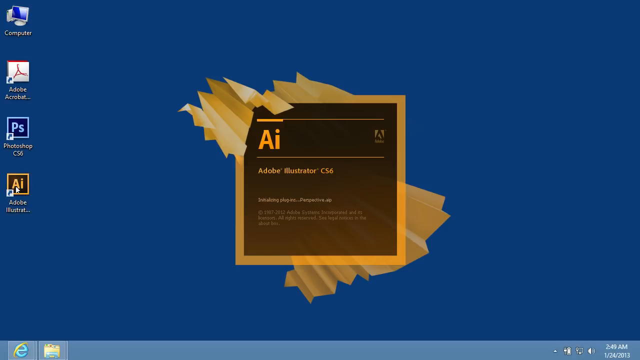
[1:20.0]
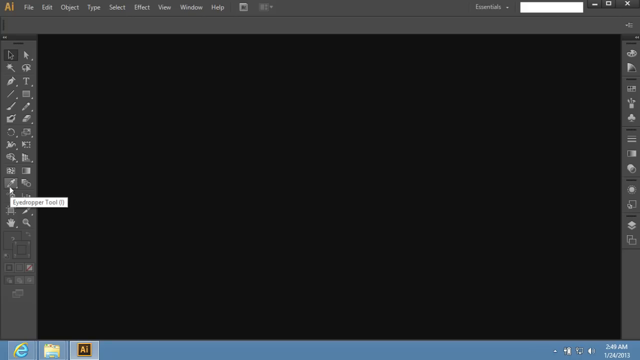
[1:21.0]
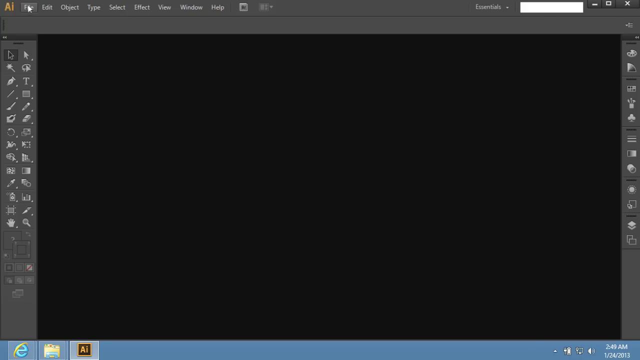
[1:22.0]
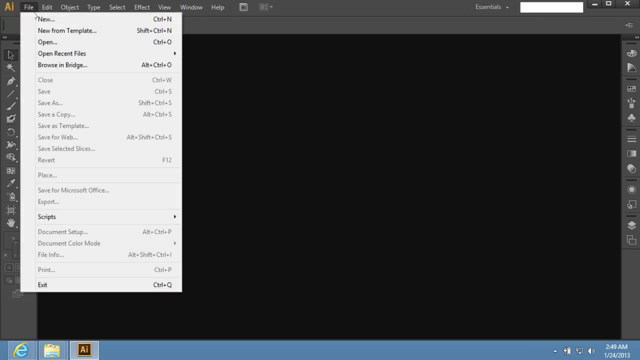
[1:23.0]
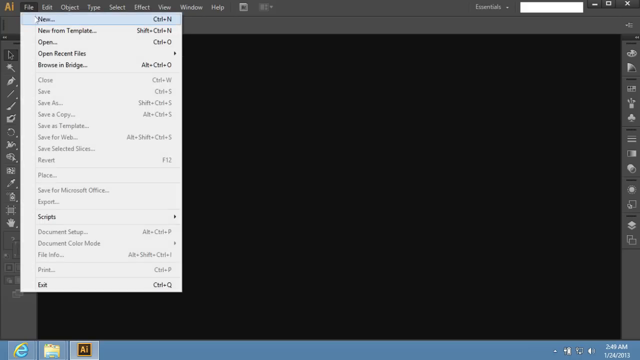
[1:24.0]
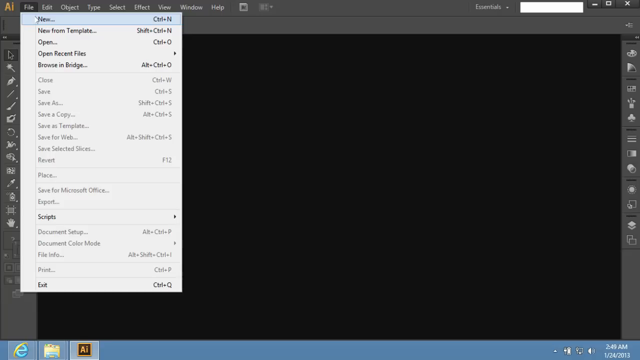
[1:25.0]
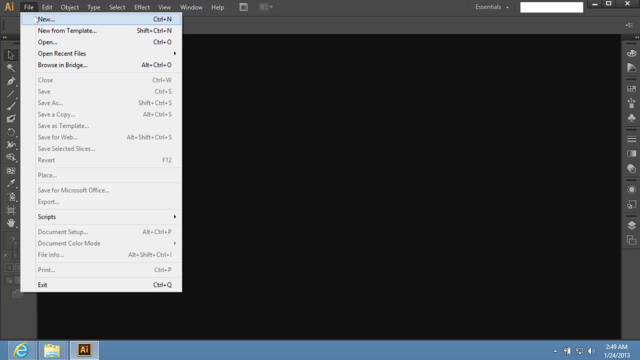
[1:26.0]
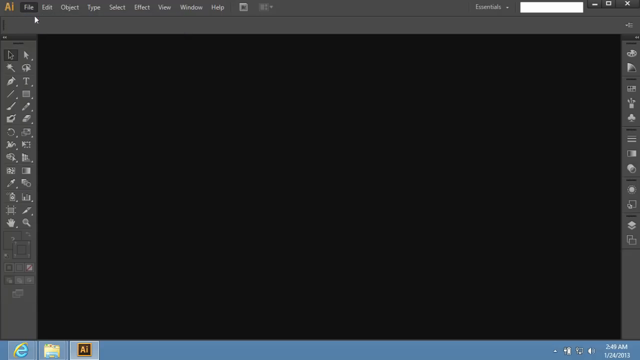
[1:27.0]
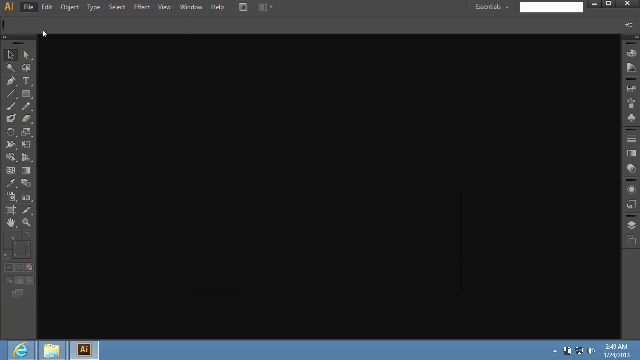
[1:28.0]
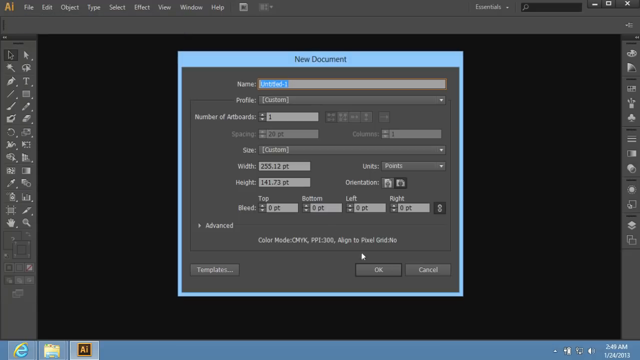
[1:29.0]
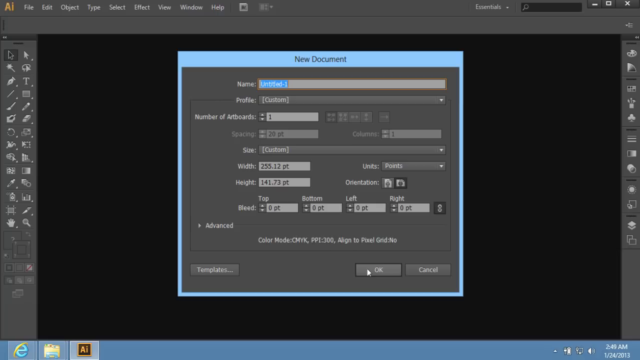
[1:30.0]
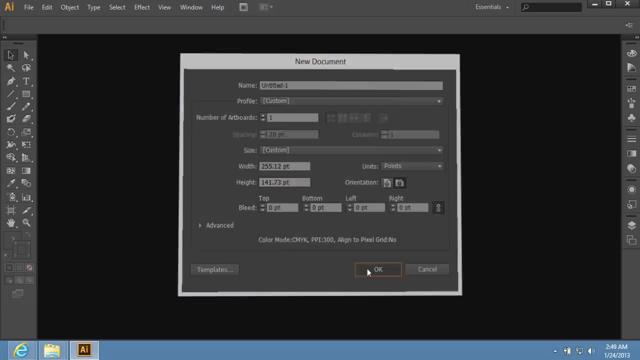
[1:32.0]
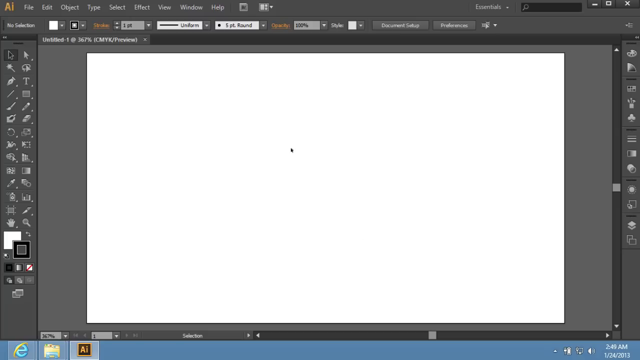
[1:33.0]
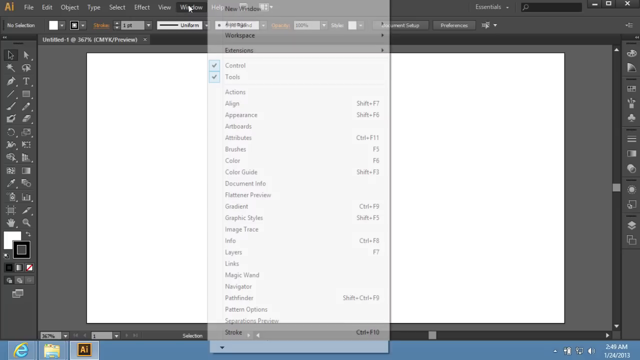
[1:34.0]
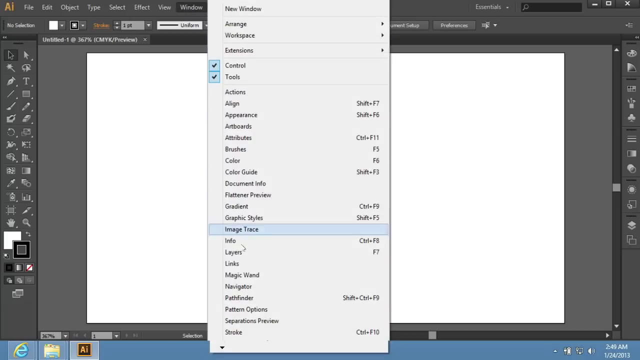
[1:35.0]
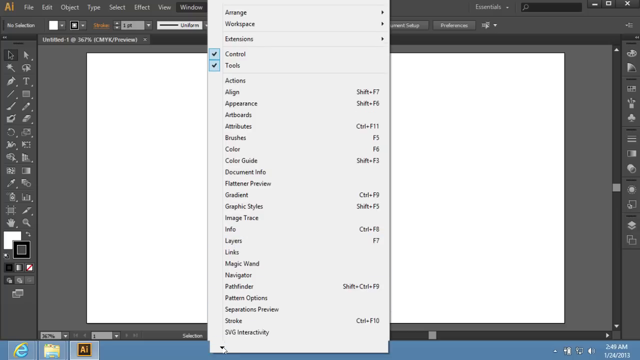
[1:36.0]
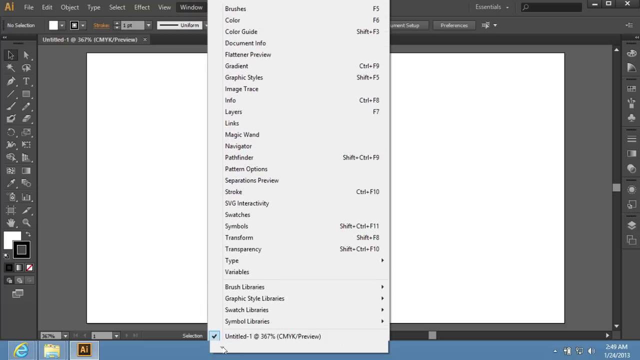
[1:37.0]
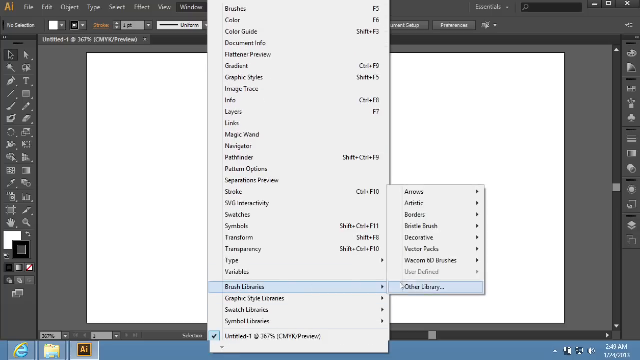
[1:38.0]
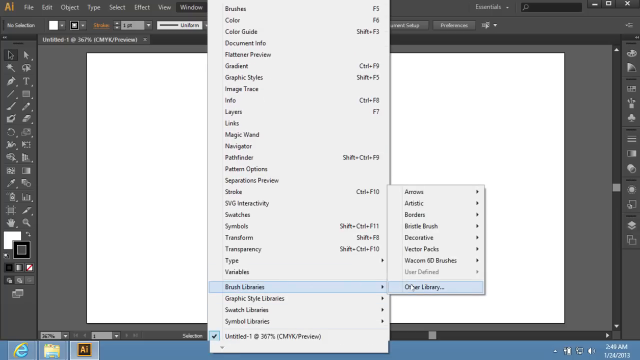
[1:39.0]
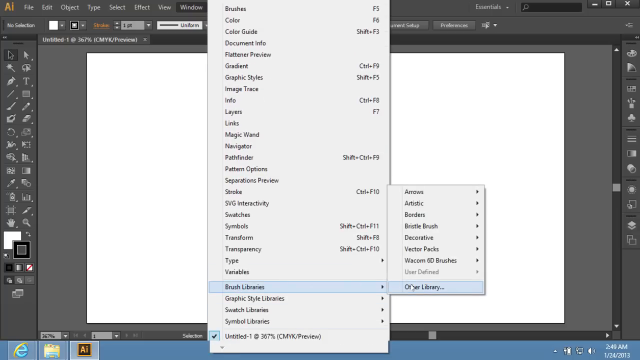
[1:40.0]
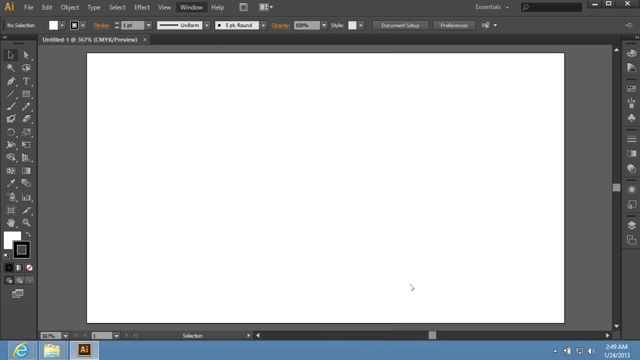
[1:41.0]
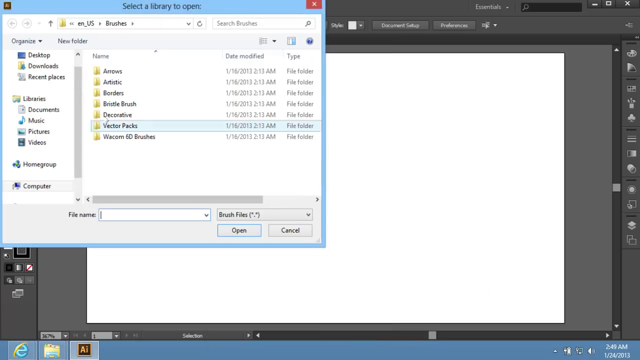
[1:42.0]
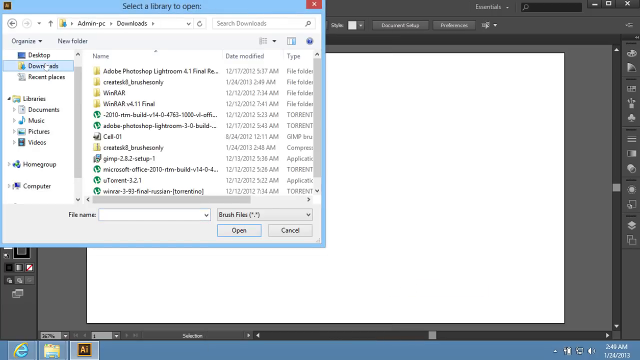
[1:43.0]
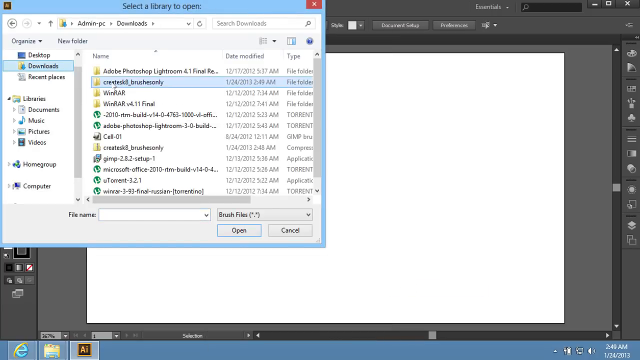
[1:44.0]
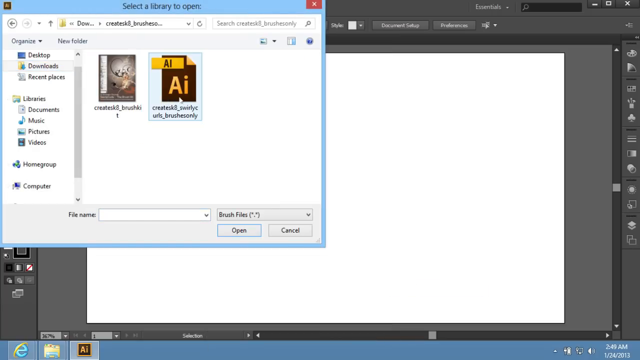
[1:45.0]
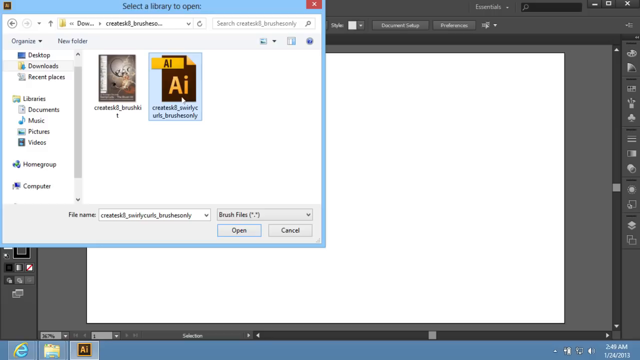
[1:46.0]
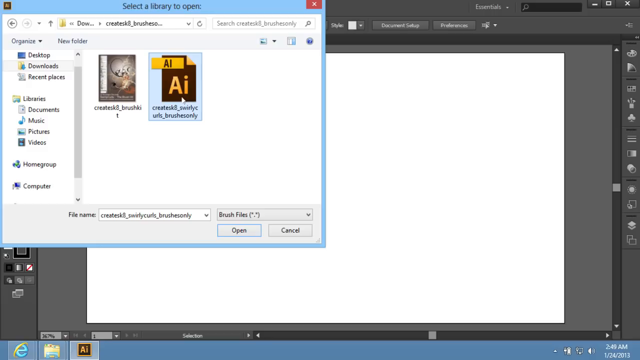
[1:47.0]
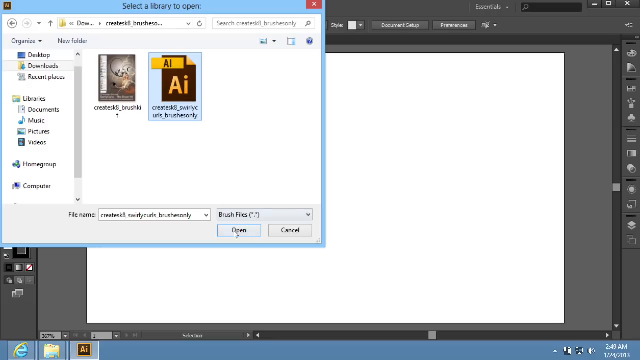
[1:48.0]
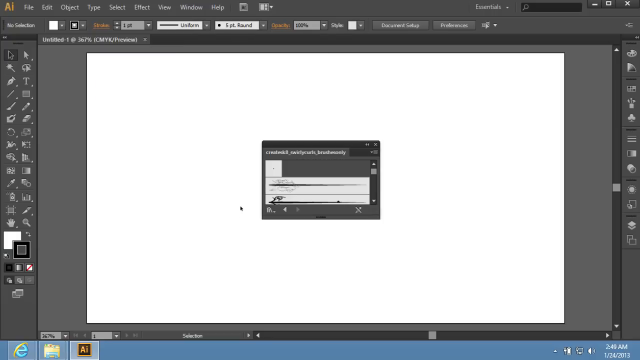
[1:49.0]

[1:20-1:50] Adobe Illustrator opens into its program window, and the person goes straight into a menu and creates a new document. From another menu, it looks like they go to the brush libraries, and a Windows pane opens in which they navigate, presumably to the location where they saved the Swirly Curls brush set, which they then appear to install into Illustrator. The screen is small, so the text in the menus is hard to read.